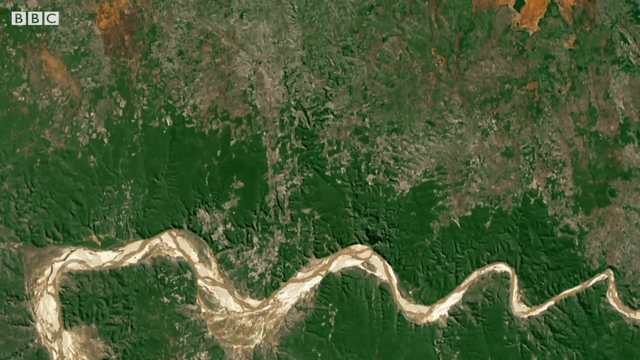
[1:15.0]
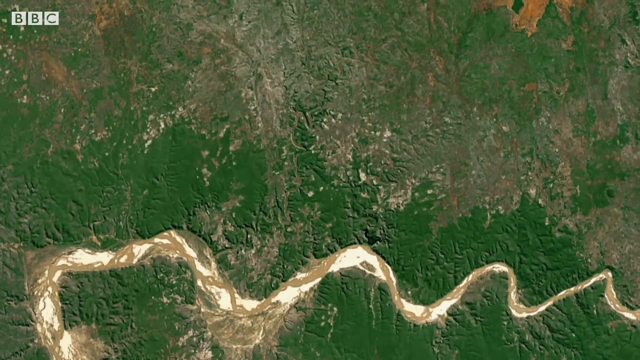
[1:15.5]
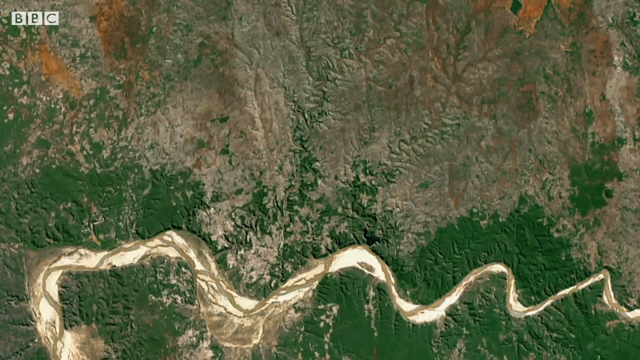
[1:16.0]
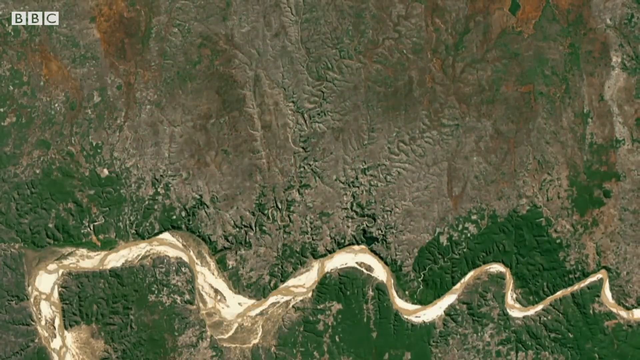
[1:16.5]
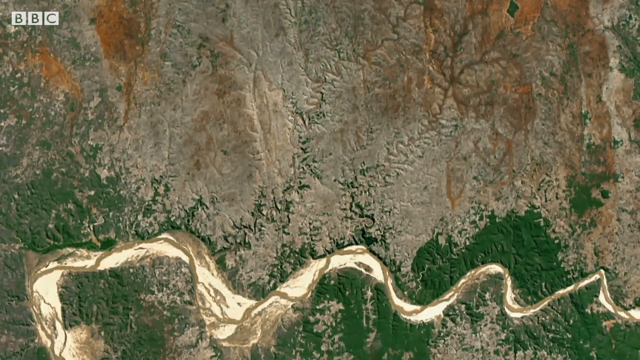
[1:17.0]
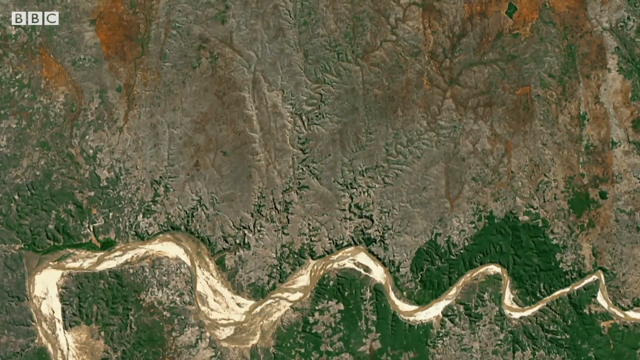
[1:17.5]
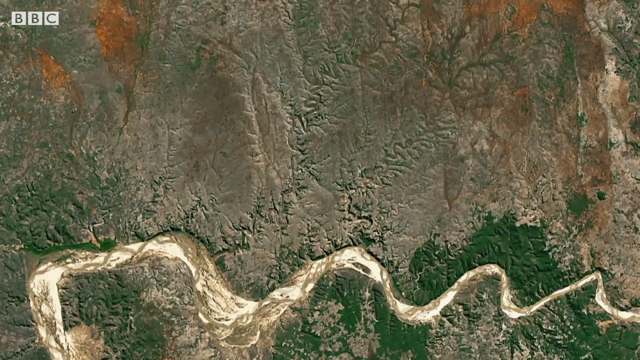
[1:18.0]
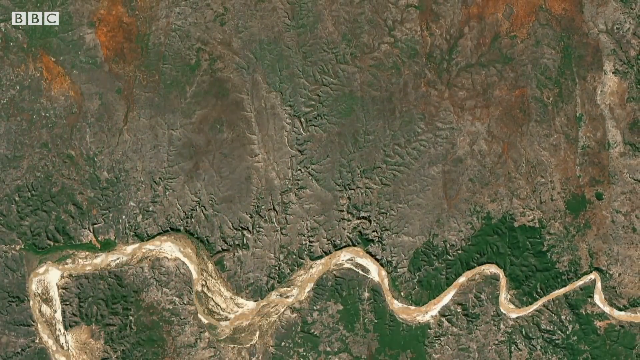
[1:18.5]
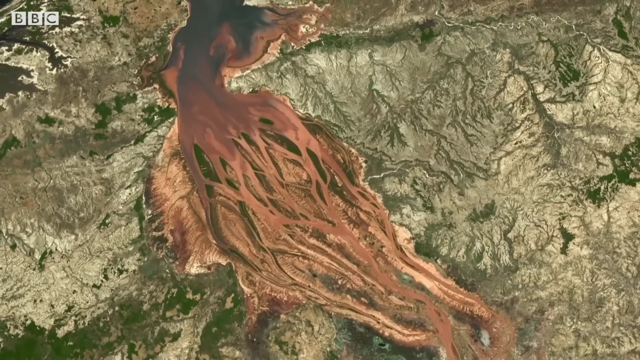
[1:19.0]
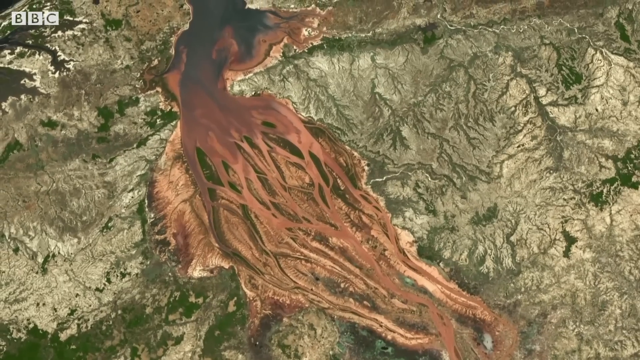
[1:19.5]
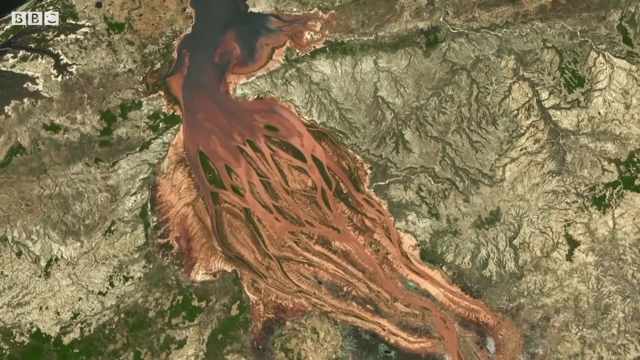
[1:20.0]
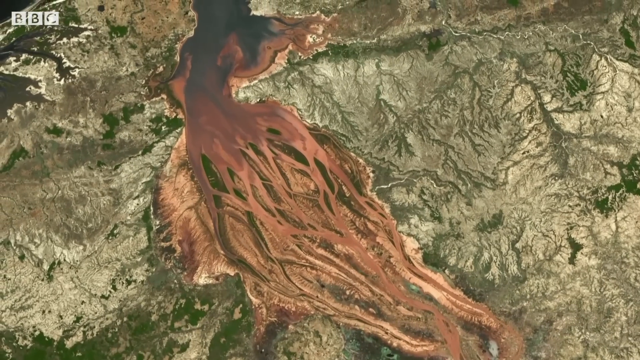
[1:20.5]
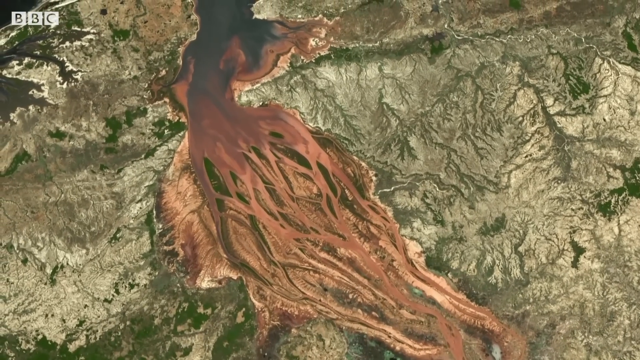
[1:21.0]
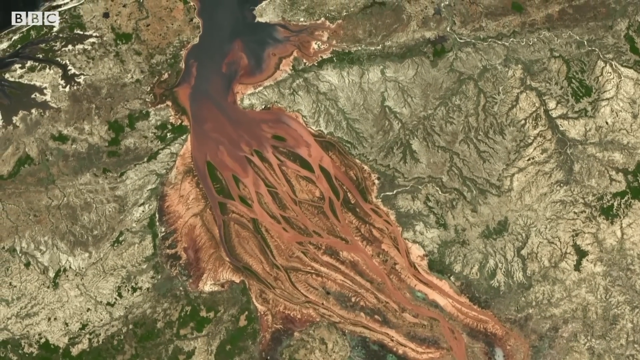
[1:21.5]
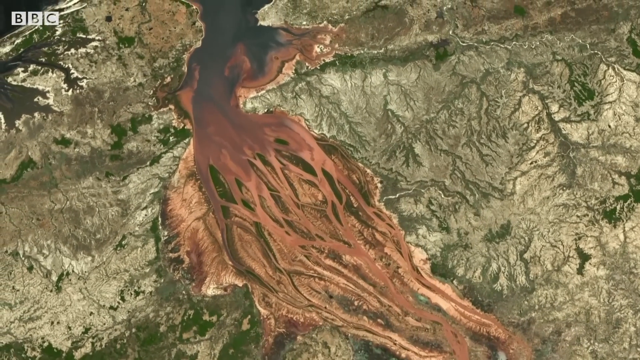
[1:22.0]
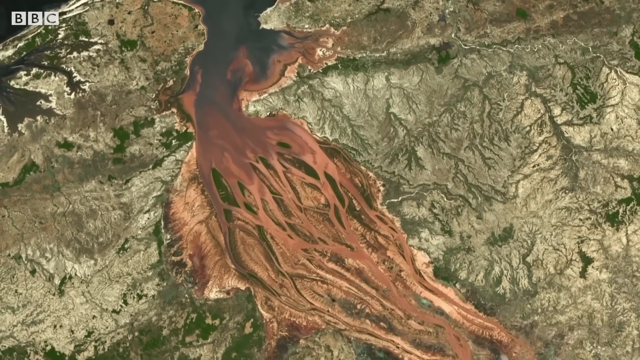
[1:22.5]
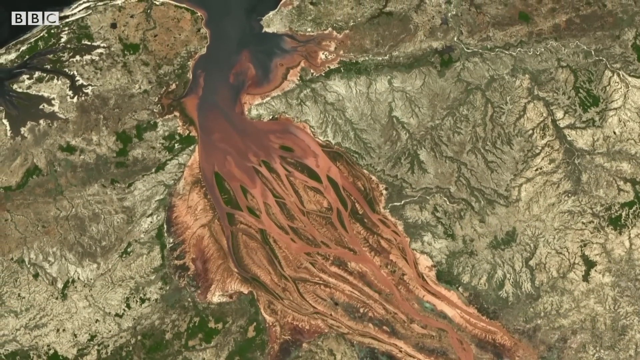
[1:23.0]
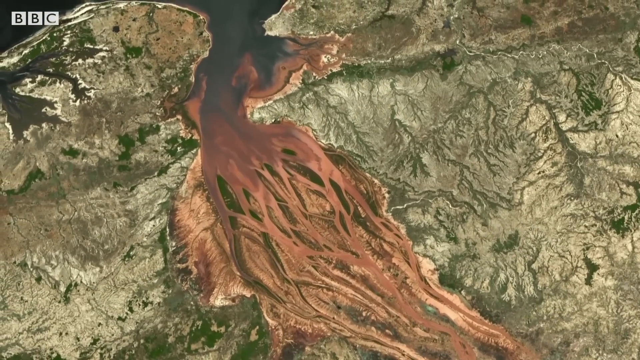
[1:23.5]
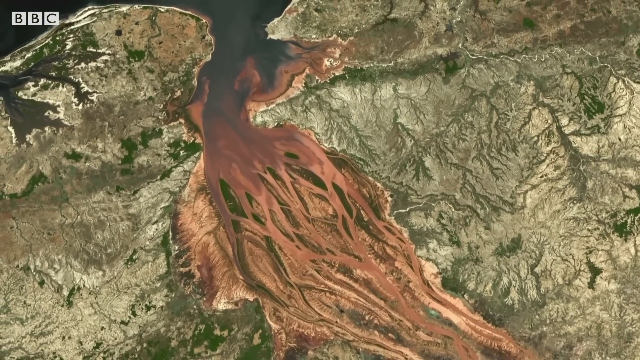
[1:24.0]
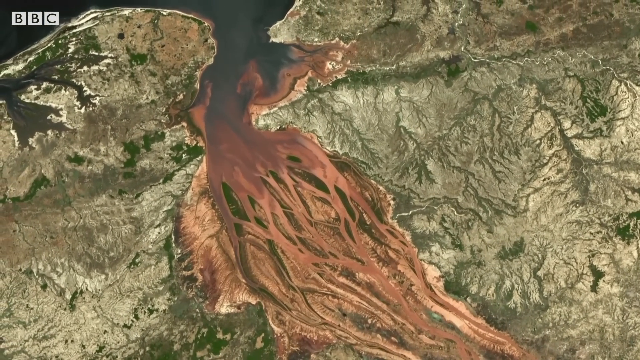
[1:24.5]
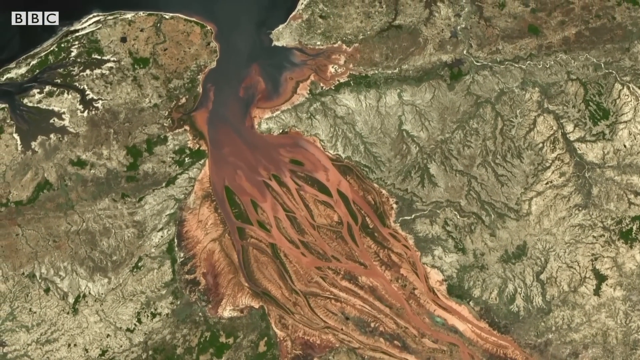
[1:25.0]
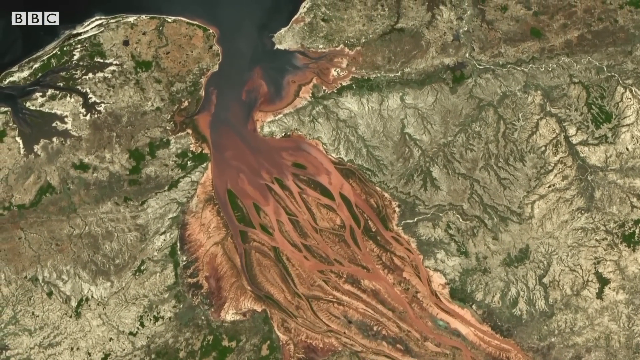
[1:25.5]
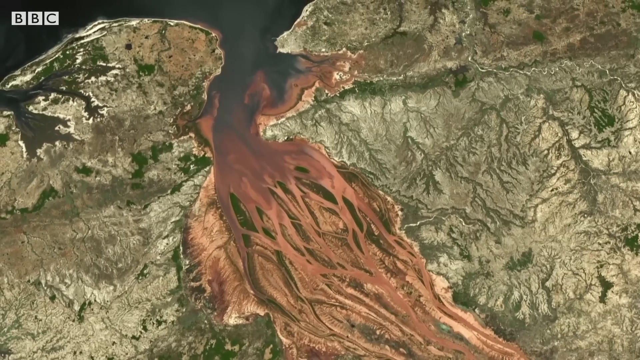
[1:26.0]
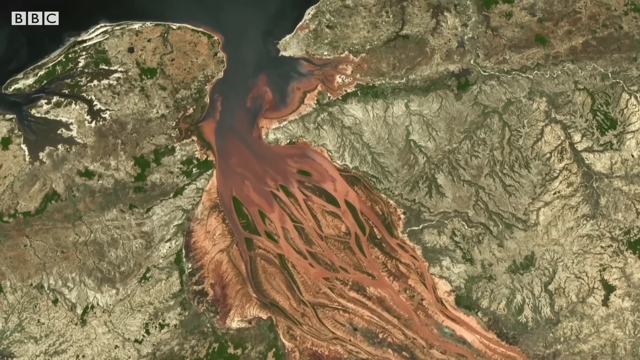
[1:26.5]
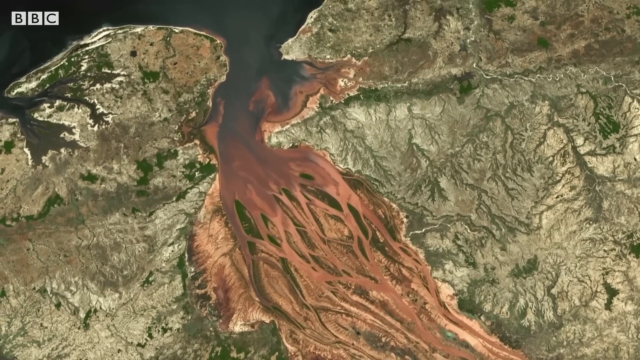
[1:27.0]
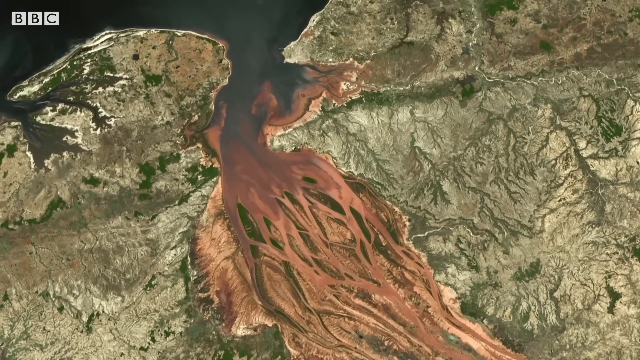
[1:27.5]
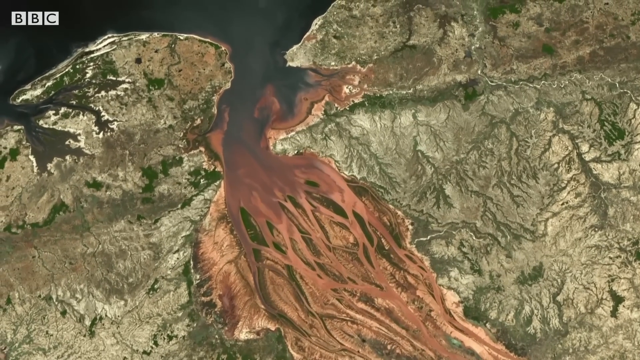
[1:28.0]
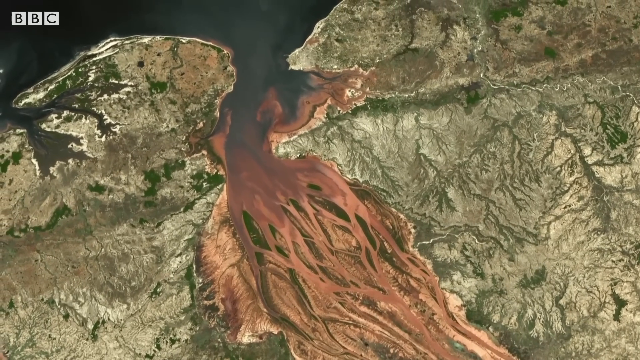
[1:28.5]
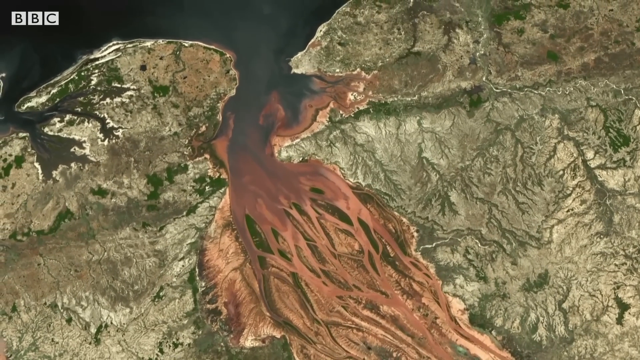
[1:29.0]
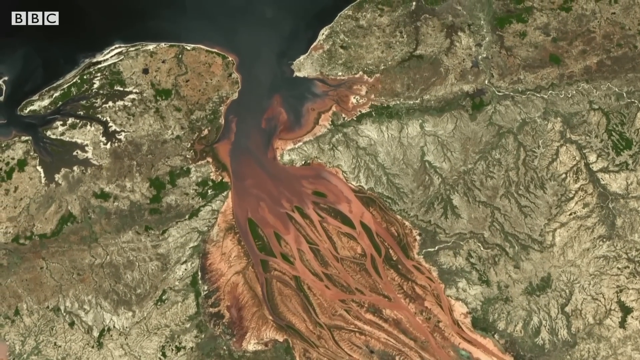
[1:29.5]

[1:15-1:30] The same landmass becomes brown and pale, very hard looking, to the point where it looks almost completely lifeless and completely dried out. Next is a giant brown, thorn-looking surface with a bunch of roots running down to the bottom right; they all lead to the top left into some sort of black pool that looks very dried up, almost like dried-out water or dried-out volcanic lava. It kind of looks like an erupted volcano whose lava has completely dried out but is still very red and orange looking, with many paths running away from the giant pool, which looks like black water or black ash.